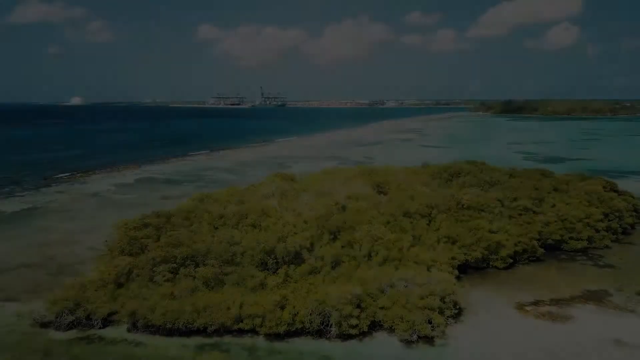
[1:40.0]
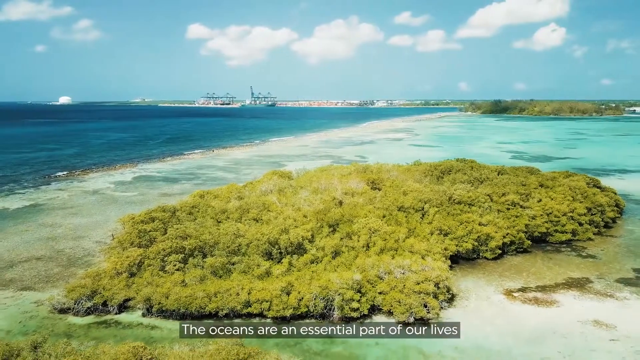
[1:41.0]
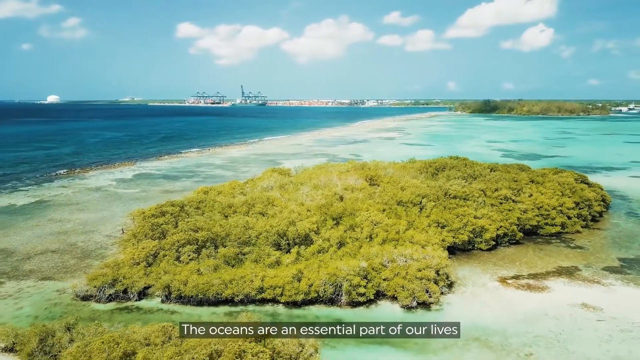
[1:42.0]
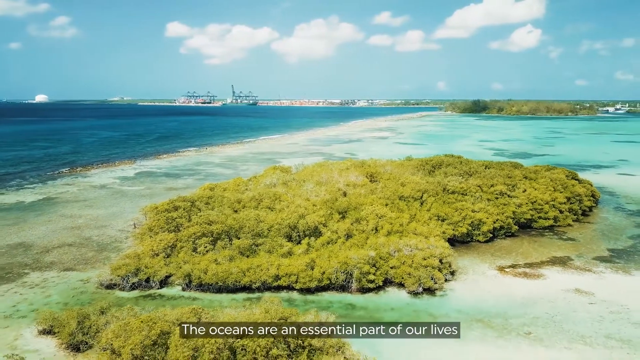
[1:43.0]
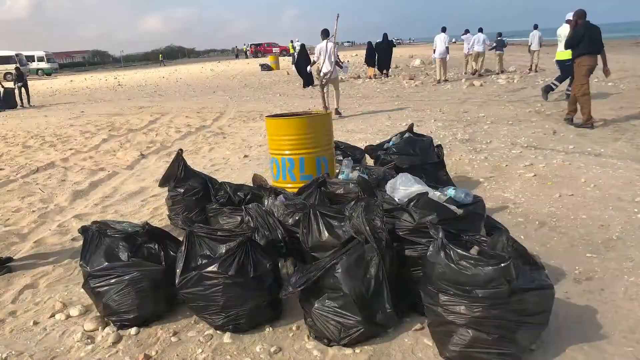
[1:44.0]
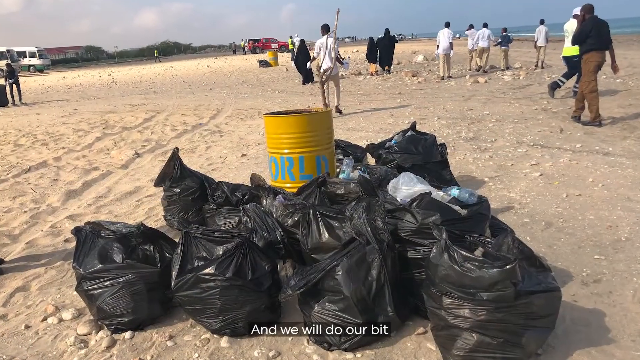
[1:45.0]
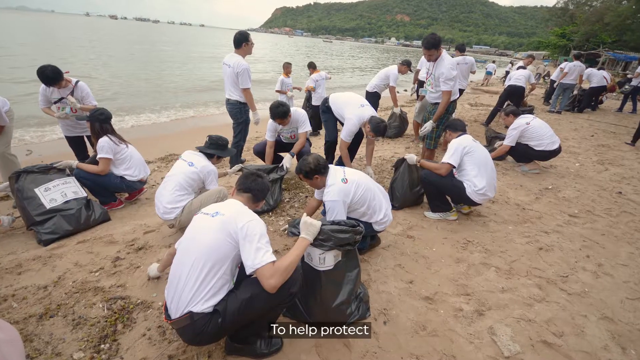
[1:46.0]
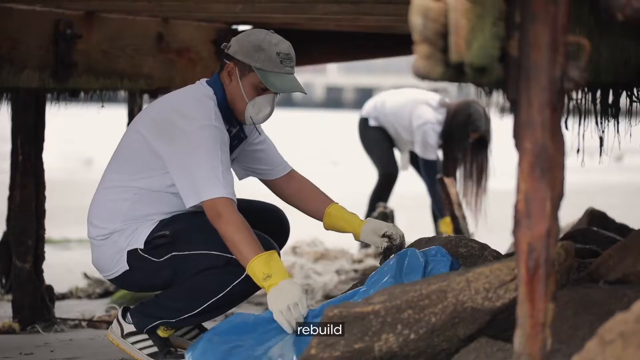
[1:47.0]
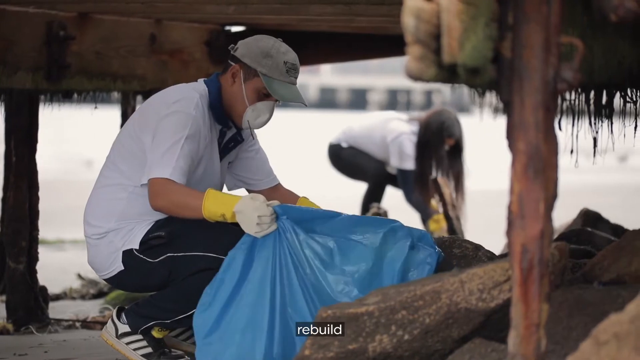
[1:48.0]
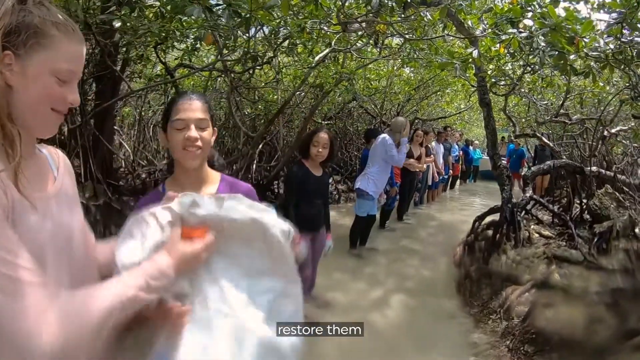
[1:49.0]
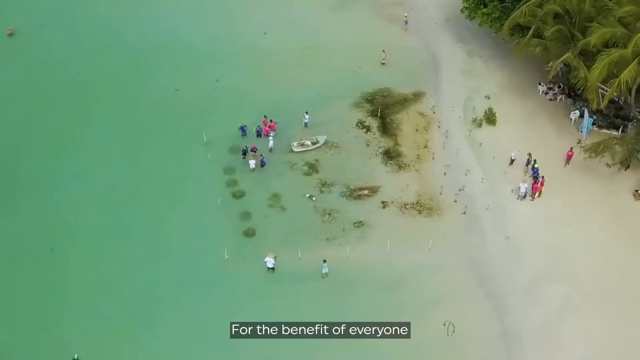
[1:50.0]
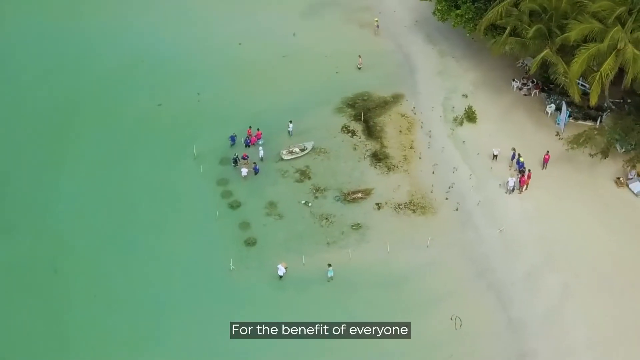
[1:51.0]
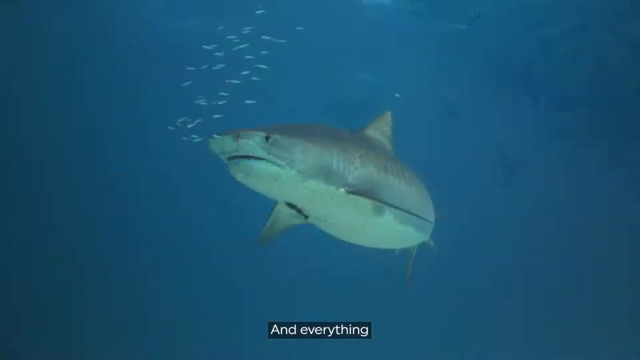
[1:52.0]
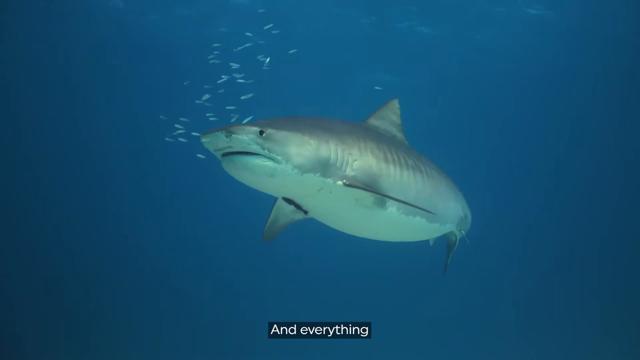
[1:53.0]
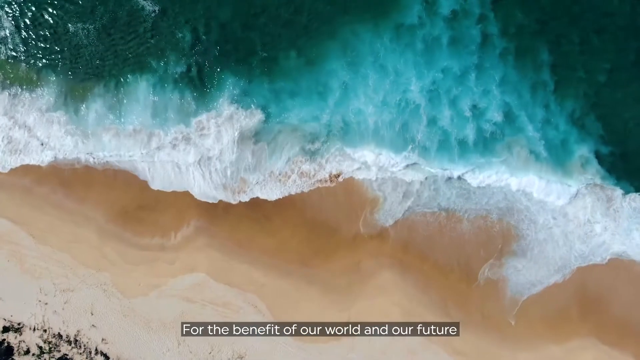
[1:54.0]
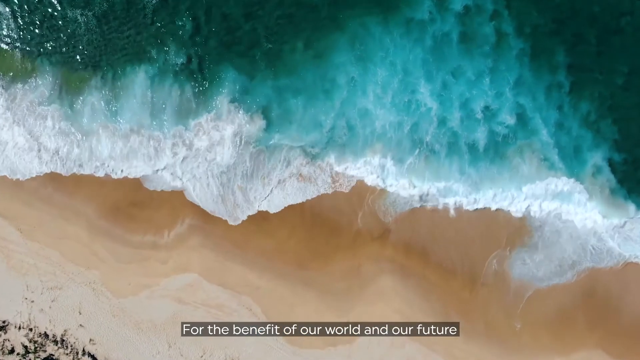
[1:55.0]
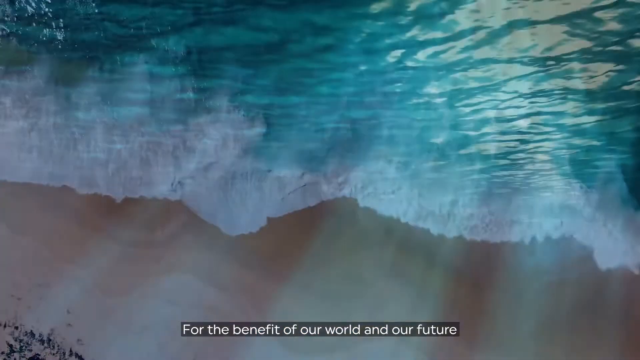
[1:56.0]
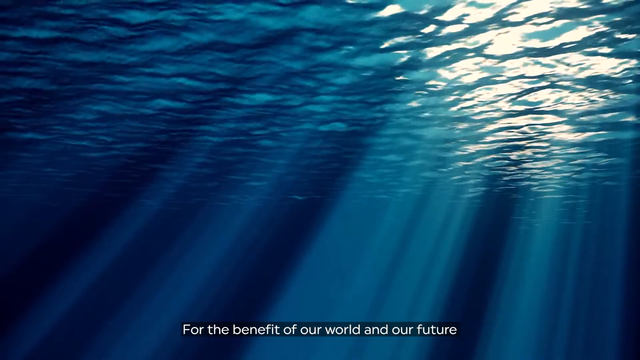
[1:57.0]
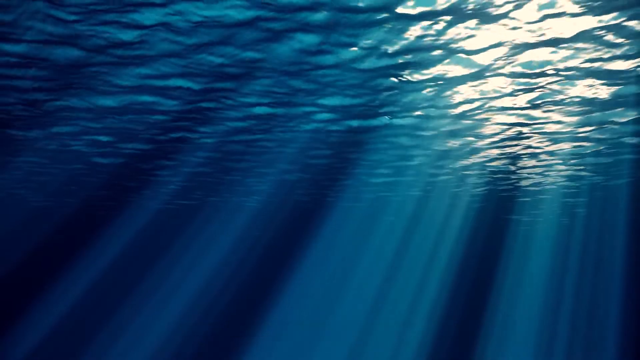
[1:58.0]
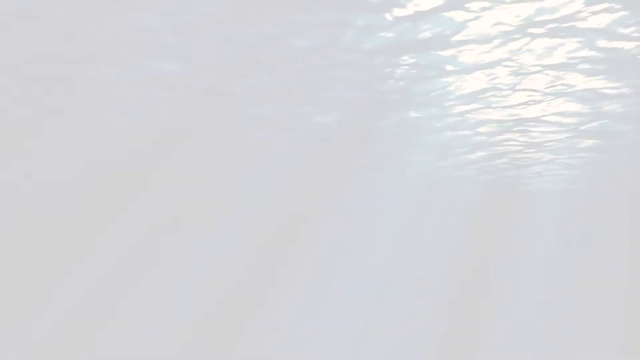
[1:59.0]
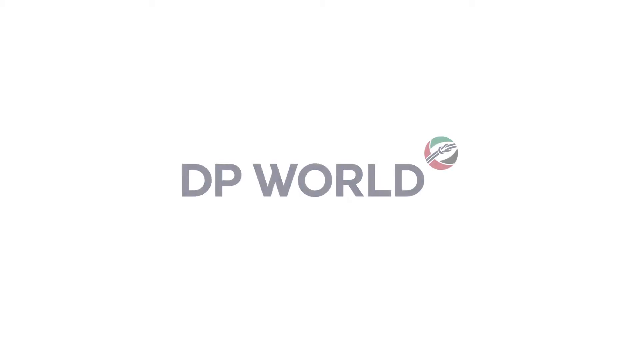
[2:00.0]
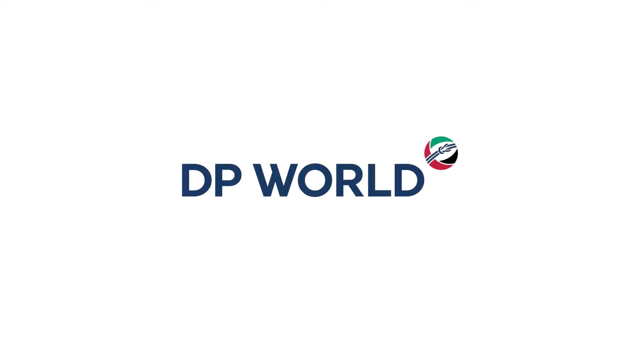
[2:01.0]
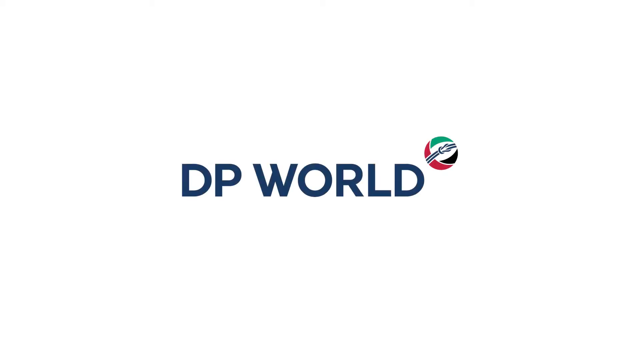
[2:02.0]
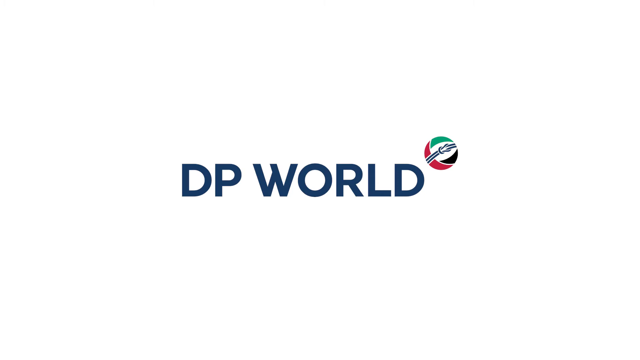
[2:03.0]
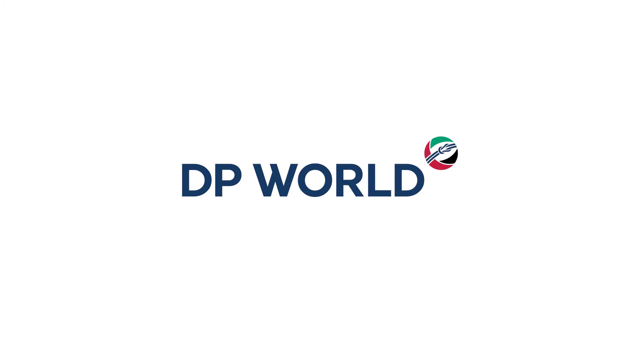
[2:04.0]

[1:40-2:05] Text begins to appear explaining what the video is about. The ocean is shown, with seaweed, the shore, waves and foam, and the broader sea further behind. The camera moves out and then in again onto a pile of rubbish on the beach, with oil cans and piles of black bags filled with rubbish. The children and young people have been collecting the rubbish into bags to clear the beach; the chain of them passing bags from person to person is shown, smiling and laughing. A shot from above shows the beach and the cleared area of pollution. A blue whale is shown swimming, and then the large wave coming in from the sea is repeated. Text reads "we all do our bit" and speaks about how precious the ocean is. The video ends with the DP World logo.